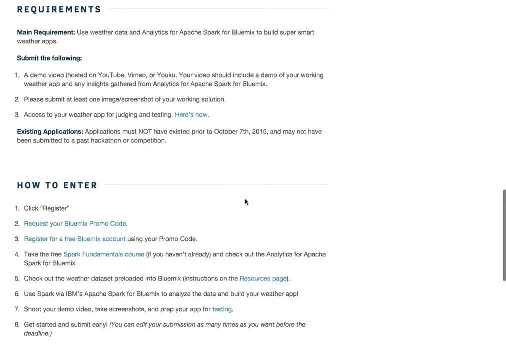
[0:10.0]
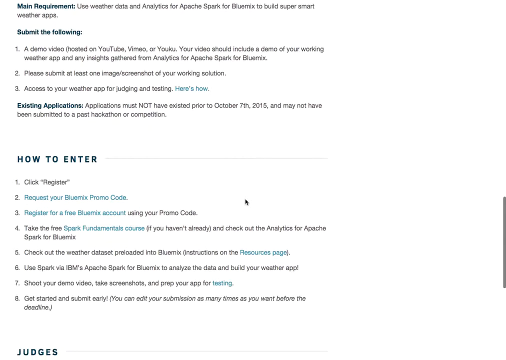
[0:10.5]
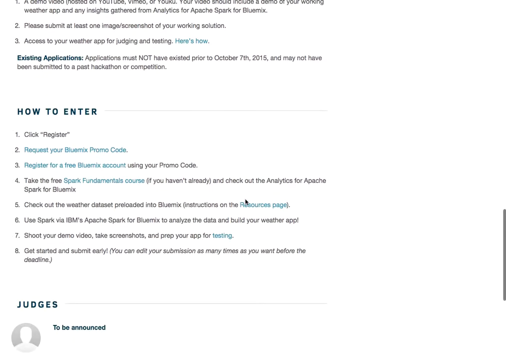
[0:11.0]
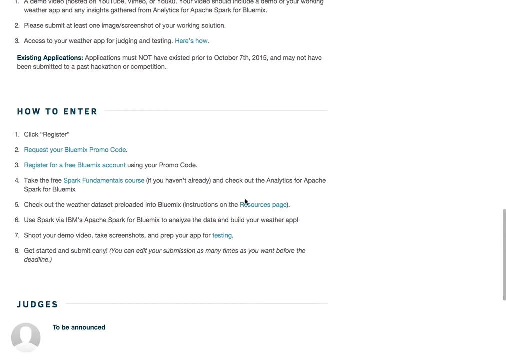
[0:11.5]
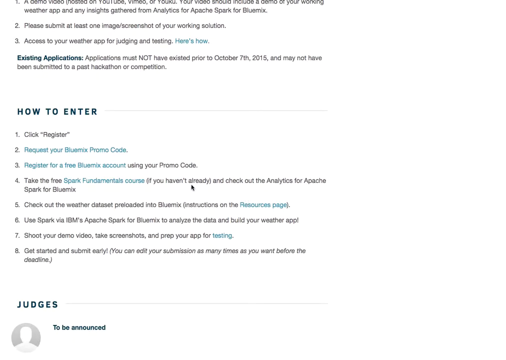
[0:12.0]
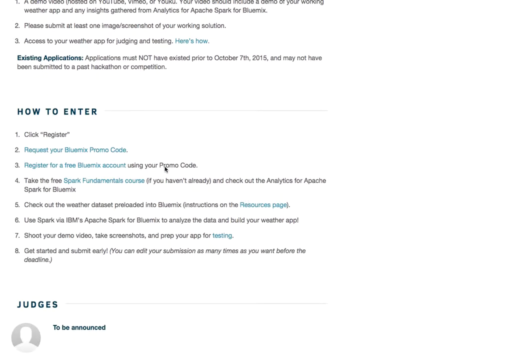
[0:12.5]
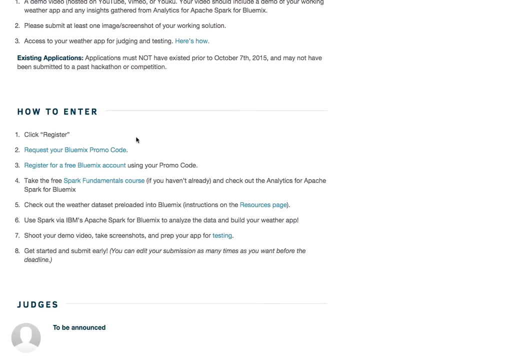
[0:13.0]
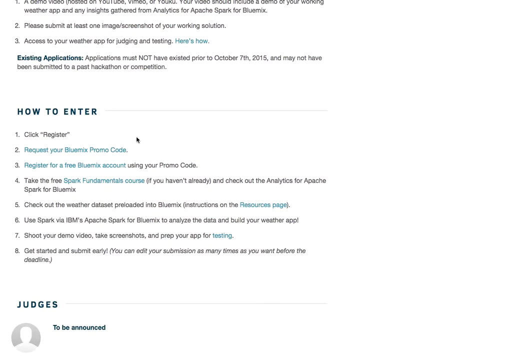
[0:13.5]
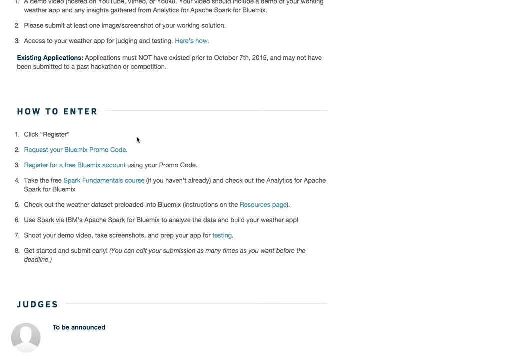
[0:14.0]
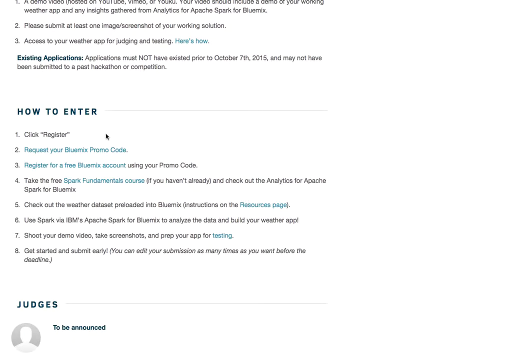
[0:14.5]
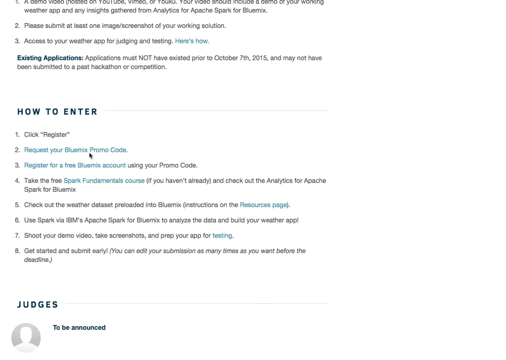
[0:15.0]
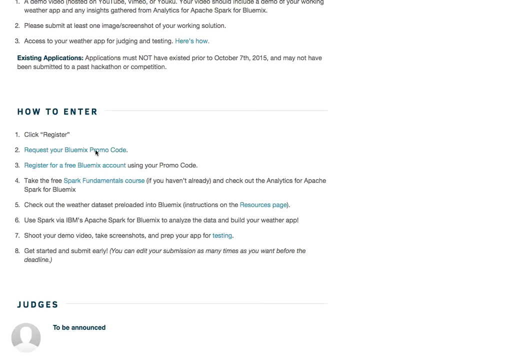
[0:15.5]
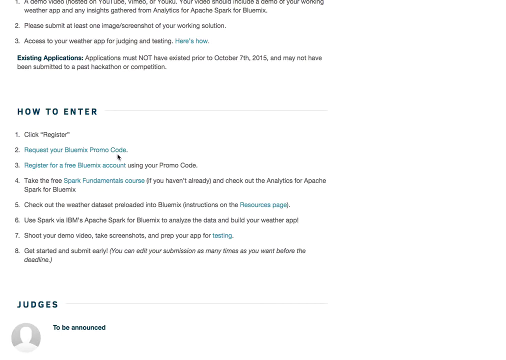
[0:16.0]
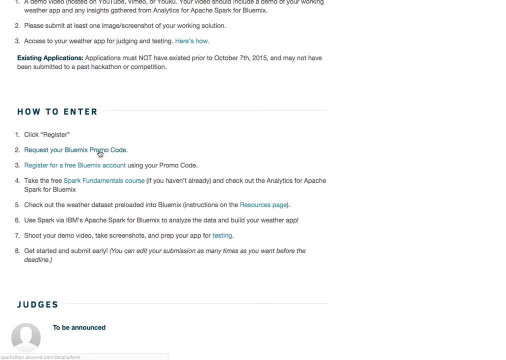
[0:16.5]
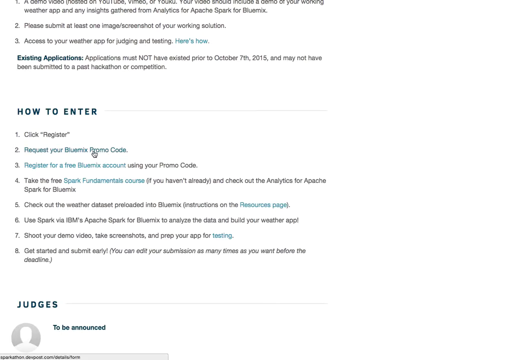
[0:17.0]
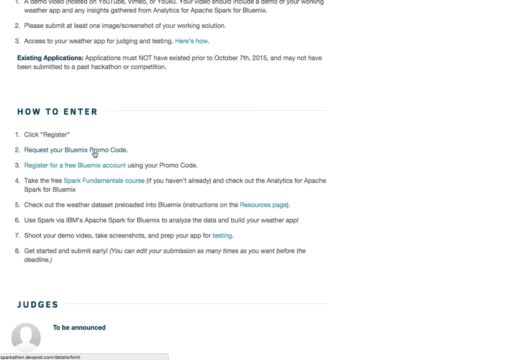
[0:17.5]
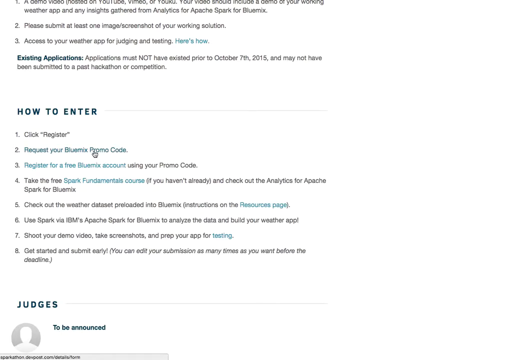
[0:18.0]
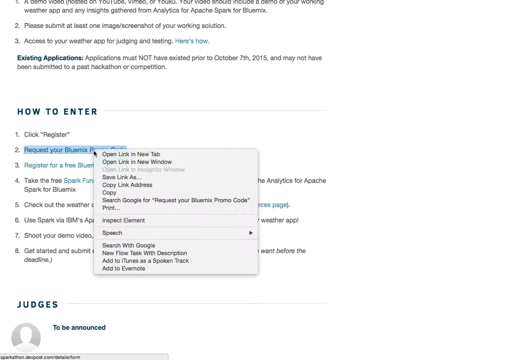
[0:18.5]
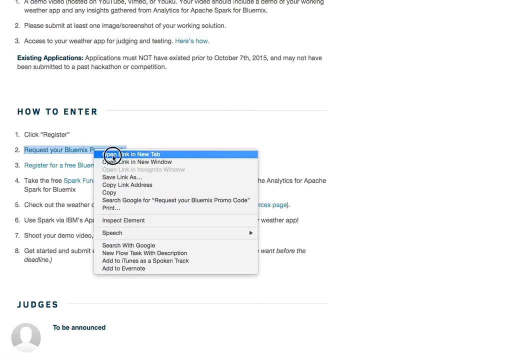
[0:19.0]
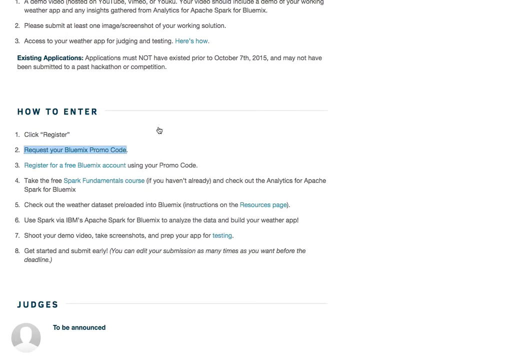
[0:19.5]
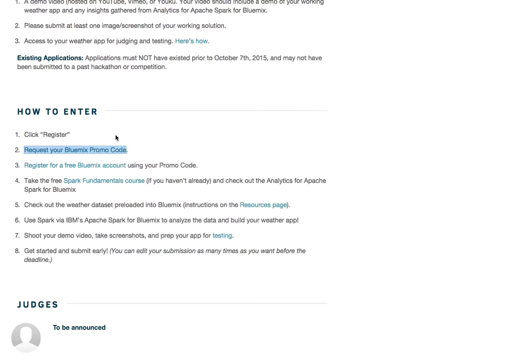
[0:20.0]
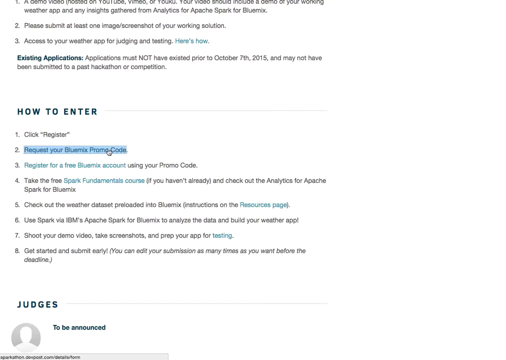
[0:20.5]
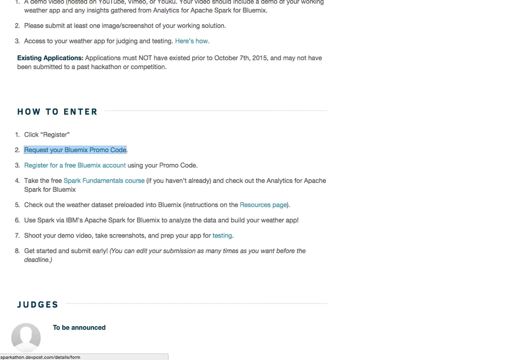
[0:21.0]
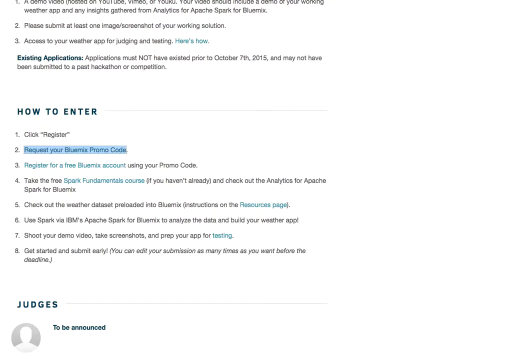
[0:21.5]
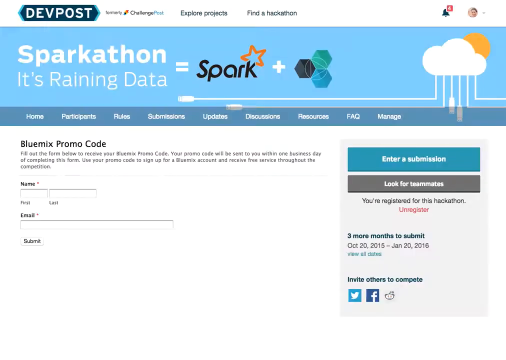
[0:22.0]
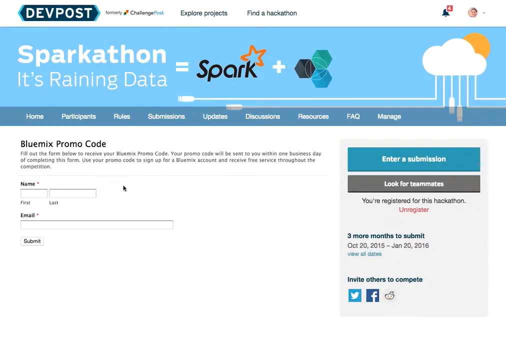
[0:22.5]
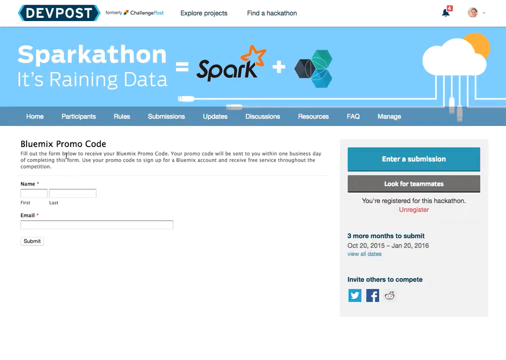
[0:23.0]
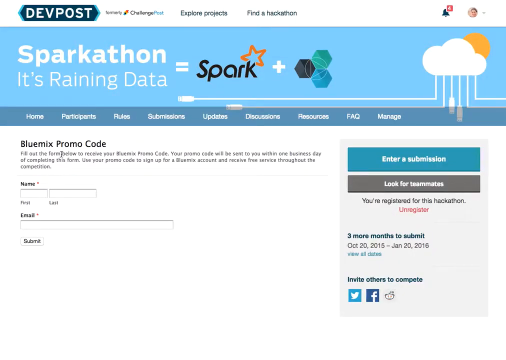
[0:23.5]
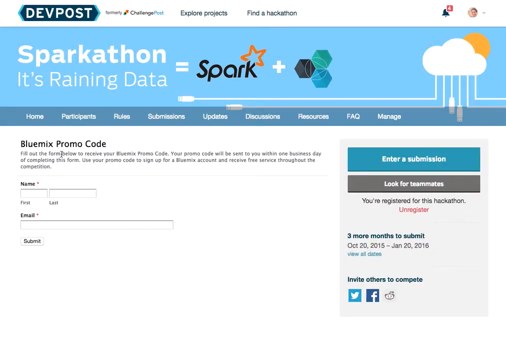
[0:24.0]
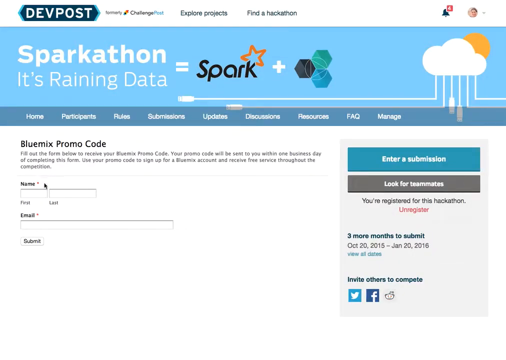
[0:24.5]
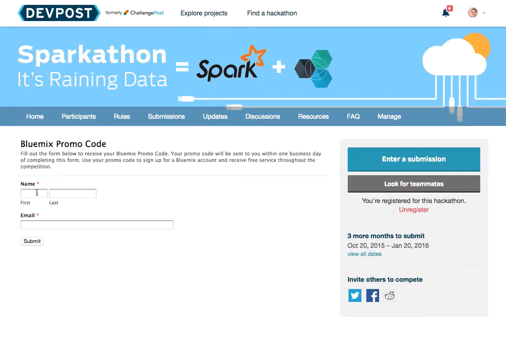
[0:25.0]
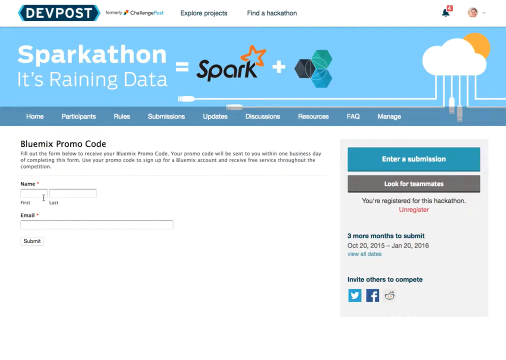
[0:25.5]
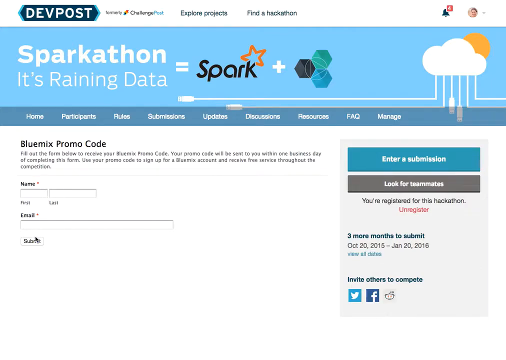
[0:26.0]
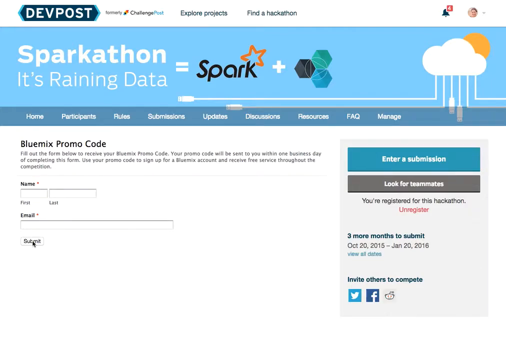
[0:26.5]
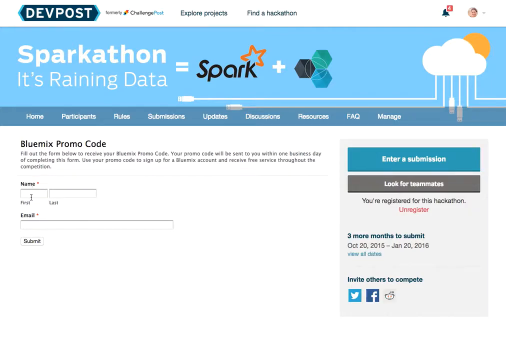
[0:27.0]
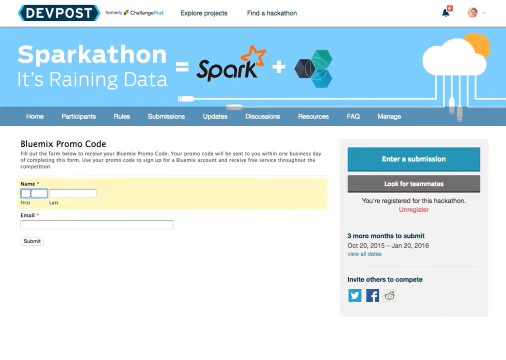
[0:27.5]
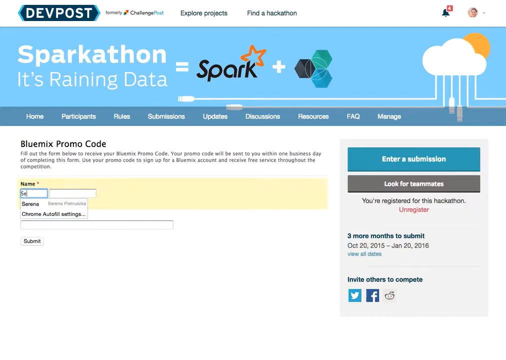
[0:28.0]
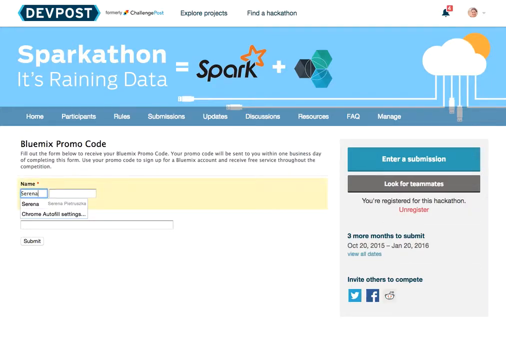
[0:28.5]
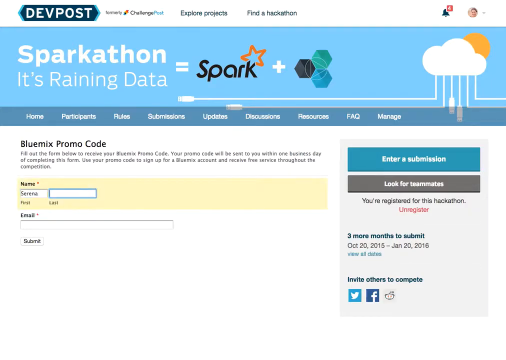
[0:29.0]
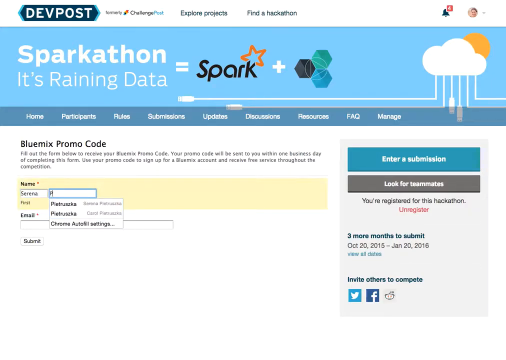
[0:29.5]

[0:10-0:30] A portion of a web page is shown. It has a section called requirements with three items, numbered 1, 2 and 3, and a section called how to enter with eight steps, step 1 through step 8. A black mouse pointer moves slowly toward the left side of the screen and hovers around the how to enter section. It then hovers over a link that says "request your promo code", which is step 2 of the how to enter section. On the bottom left is another section labelled "judges". The mouse pointer brings up a menu, the kind that appears when the mouse is right-clicked.